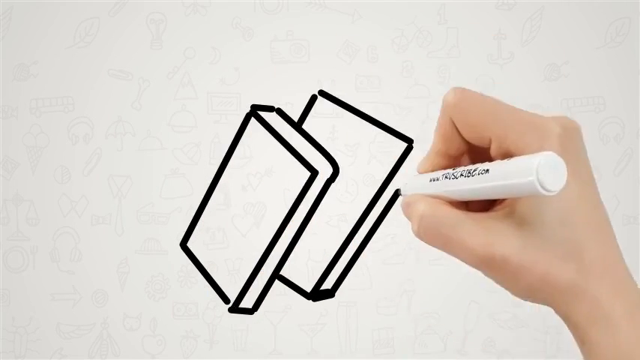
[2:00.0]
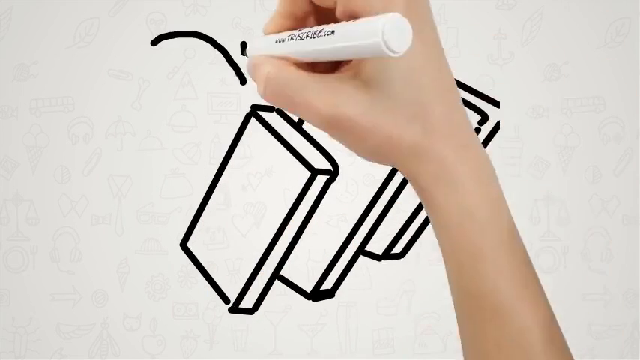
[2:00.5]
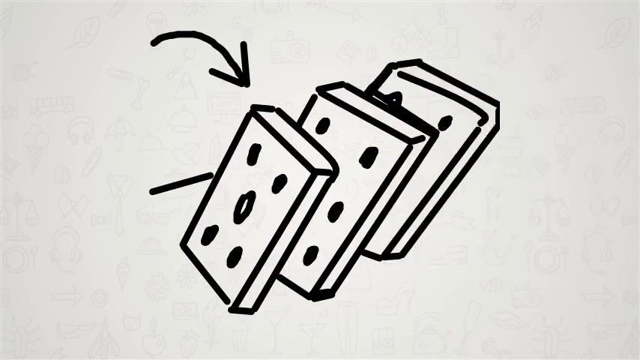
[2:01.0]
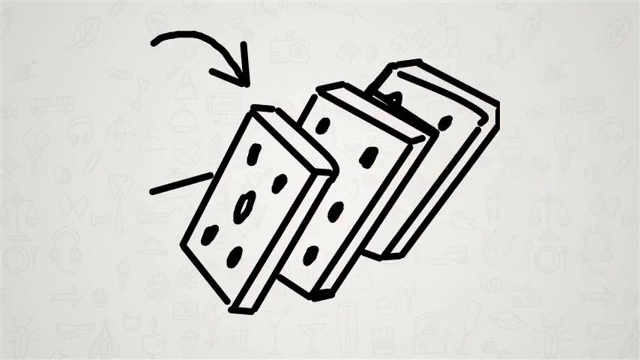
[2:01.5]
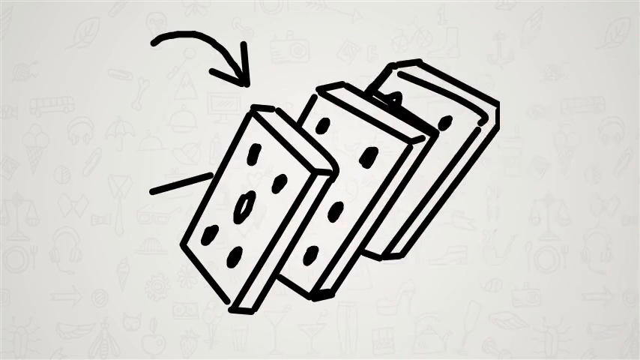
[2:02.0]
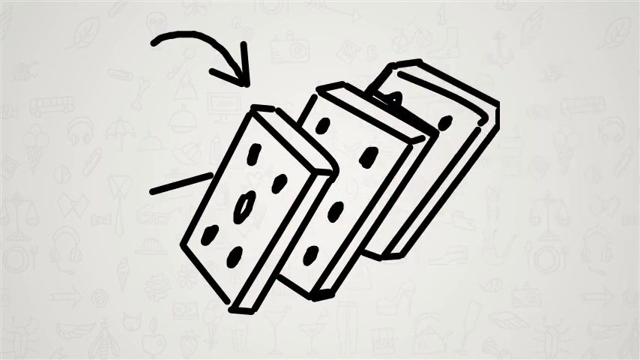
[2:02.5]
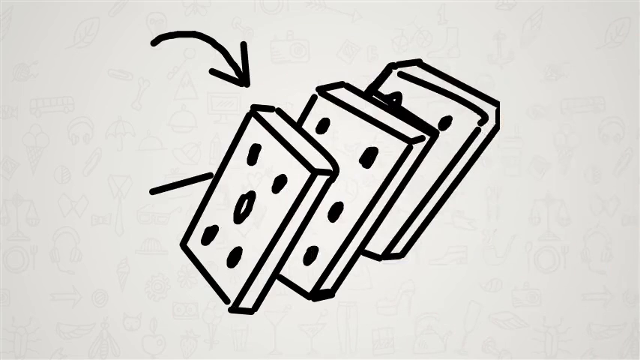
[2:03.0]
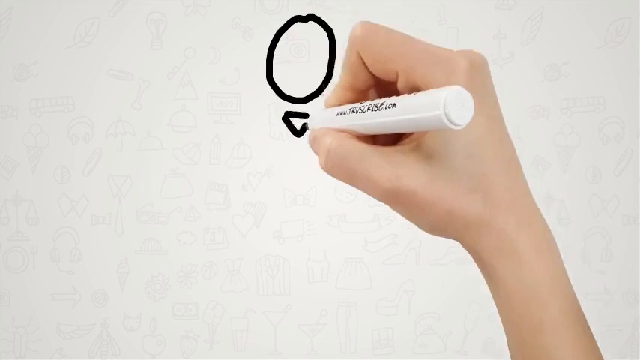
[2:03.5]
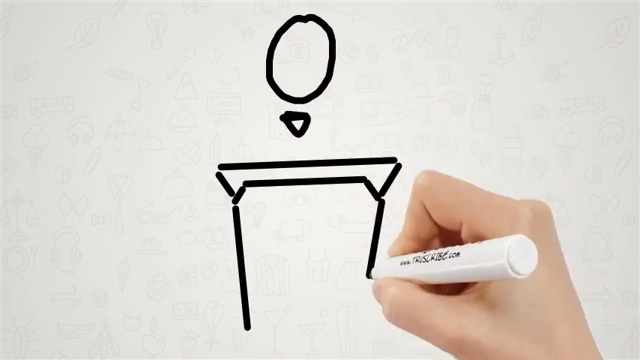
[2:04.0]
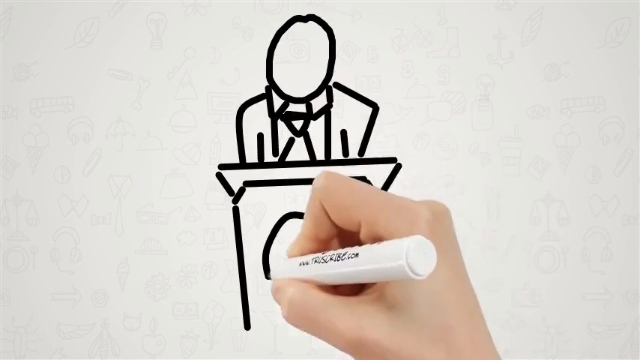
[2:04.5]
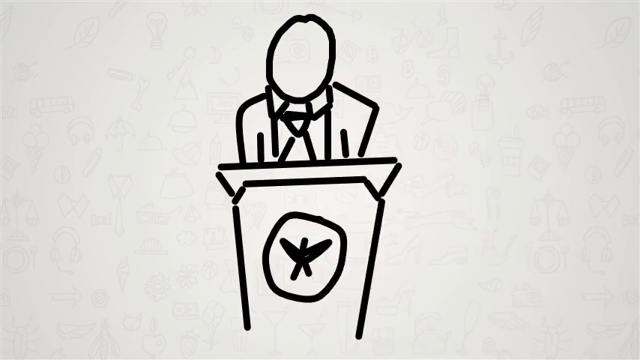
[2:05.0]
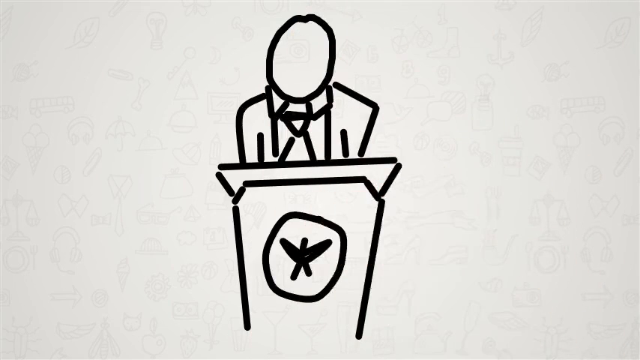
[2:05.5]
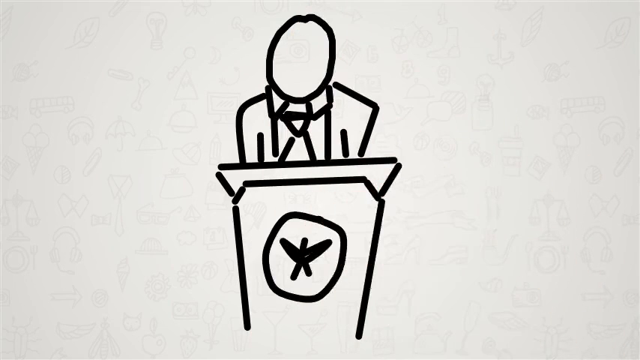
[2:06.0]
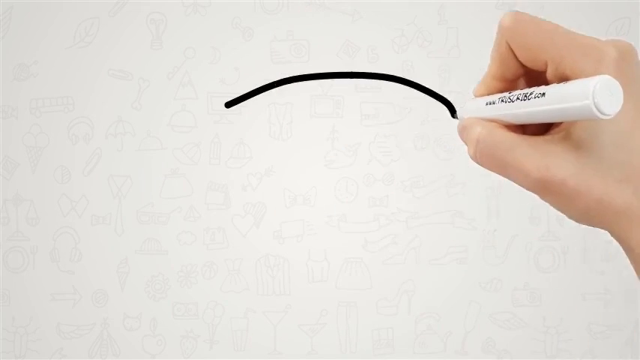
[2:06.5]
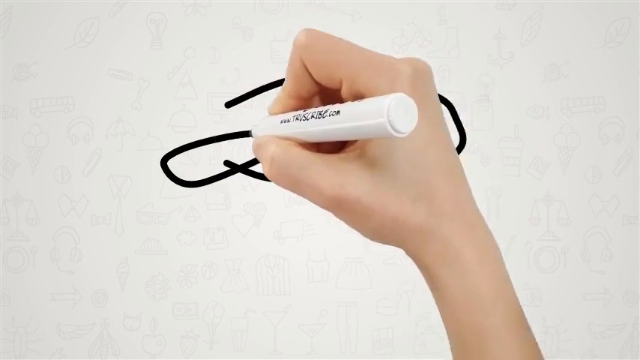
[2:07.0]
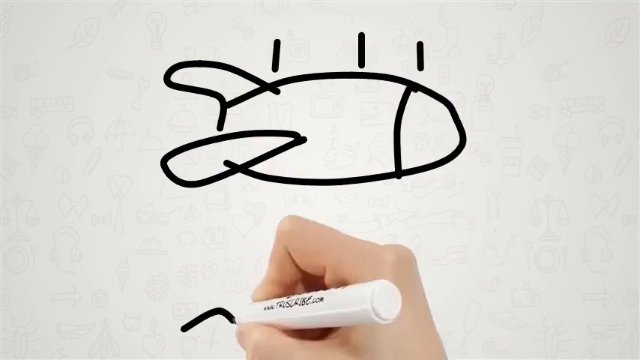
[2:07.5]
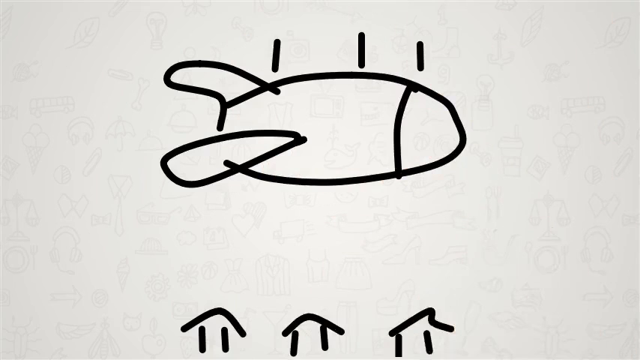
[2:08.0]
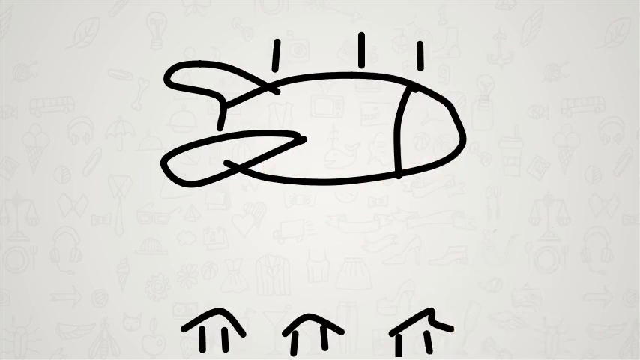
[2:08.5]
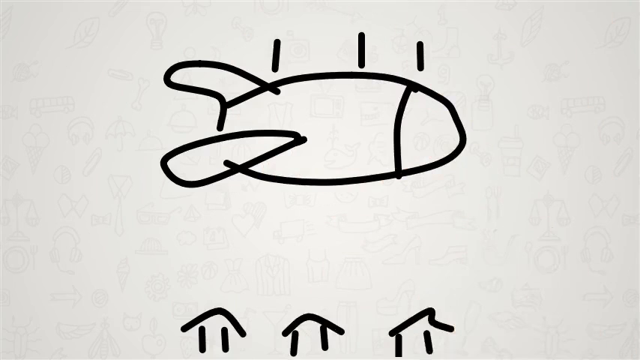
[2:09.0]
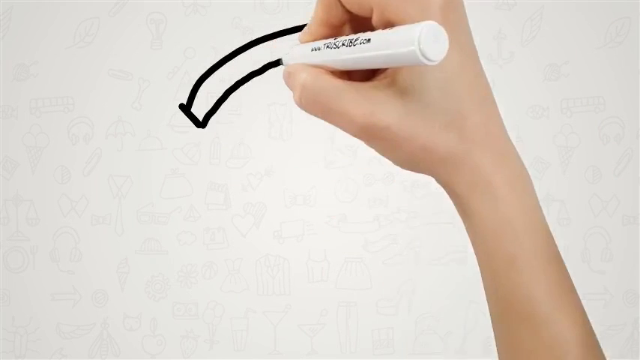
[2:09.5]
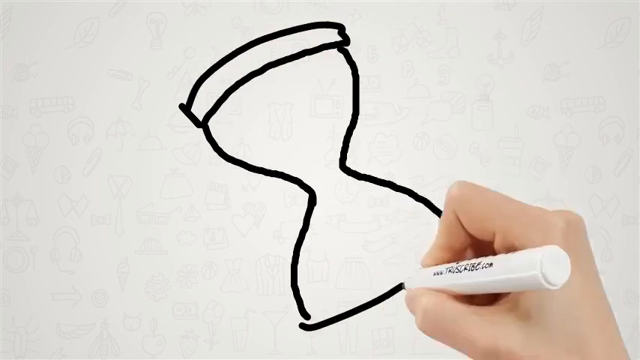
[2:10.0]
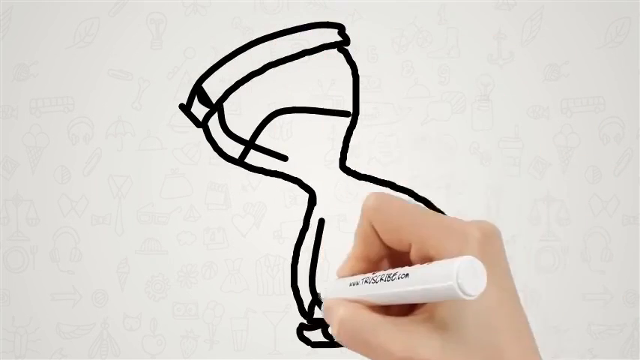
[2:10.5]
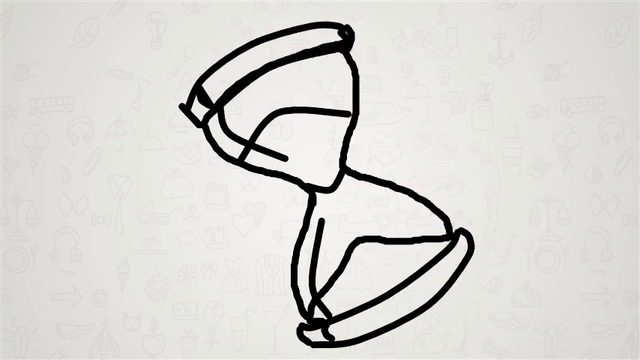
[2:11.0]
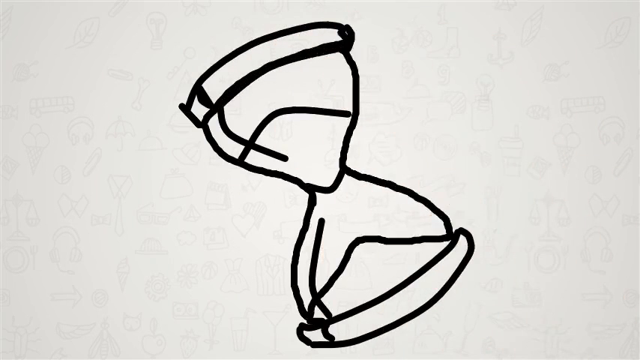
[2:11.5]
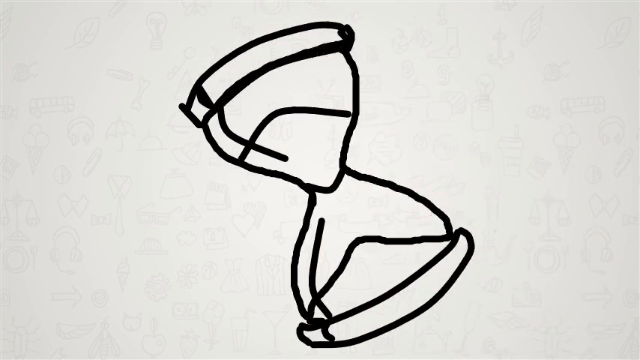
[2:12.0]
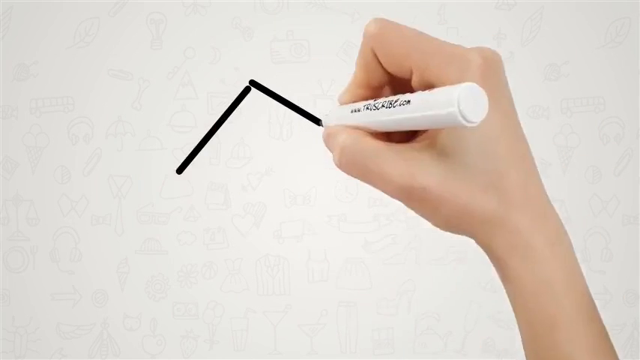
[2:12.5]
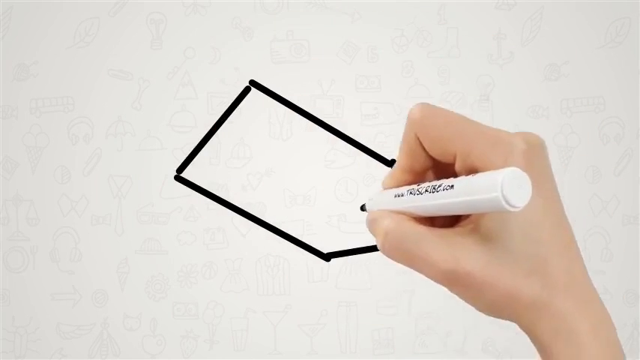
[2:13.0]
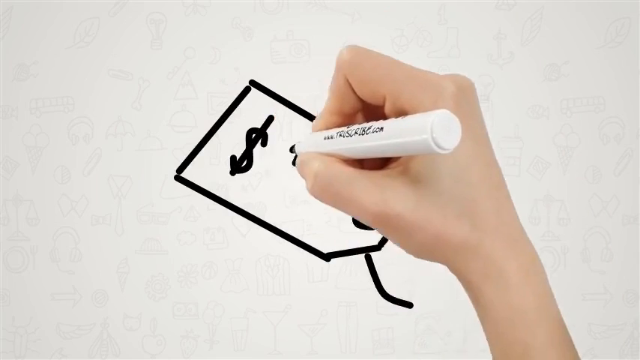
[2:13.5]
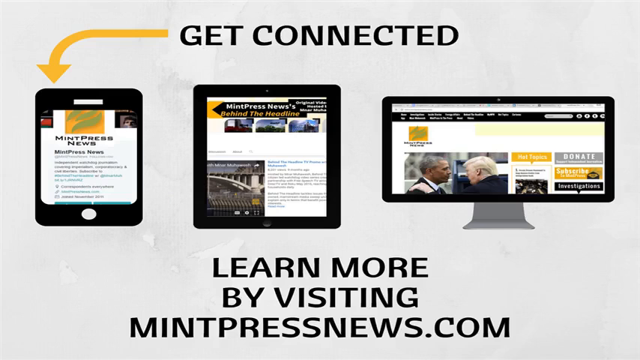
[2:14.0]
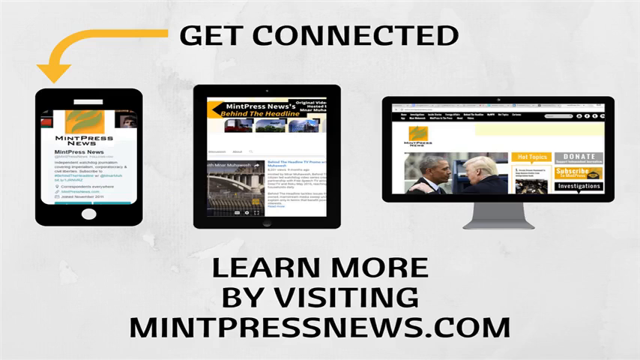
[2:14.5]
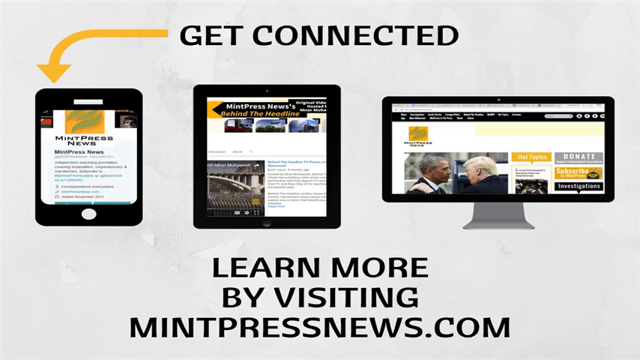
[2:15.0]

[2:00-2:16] On a white background, the hand and part of the arm of a white person draw with a white marker pen with black writing on it, making drawings in black ink; after each drawing appears, it disappears and another is drawn. The first shows an arrow pointed towards three dominoes toppling over on their side. The first domino has five dots; on the next, four dots are visible, partly covered by the domino in front; the third is mostly covered, showing part of one dot and the whole of another. Next is a front-on view of a person at a lectern, which has a circle with what looks like a star shape on it. The person looks like they are wearing a kind of suit; only their head, with no features, and part of their body are visible. Then comes a drawing of what looks like a very large bomb with two lines above it, looking like it is dropping downwards, and beneath it what looks like three small houses with sloped roofs, so it looks like a bomb is being dropped on them. Next is a black outline drawing of a side-on view of an hourglass toppling over, with sand in the bottom and the top. Then comes what looks like a price label with three dollar signs on it. A final screen very briefly shows "get connected, learn by visiting mintpressnews.com", with various screens, what looks like a tablet, a phone screen and a monitor, showing various news; the one on the far right-hand side has a picture of Barack Obama and Donald Trump on it.